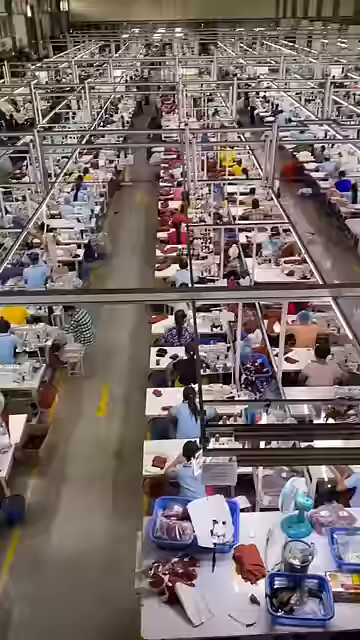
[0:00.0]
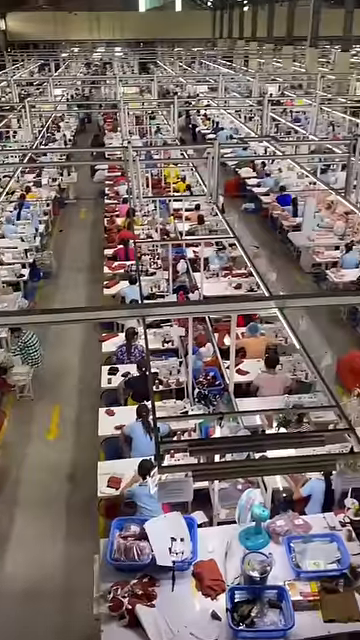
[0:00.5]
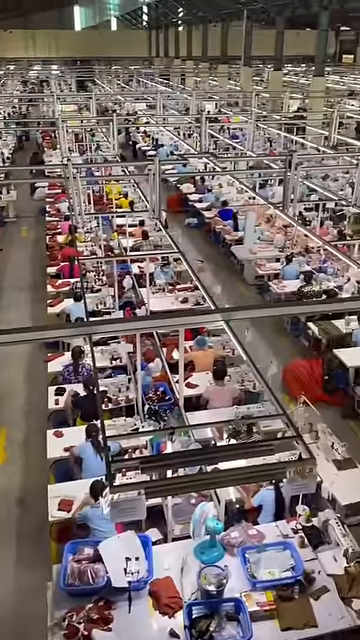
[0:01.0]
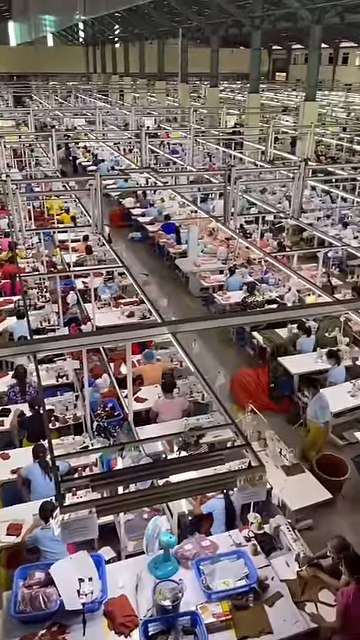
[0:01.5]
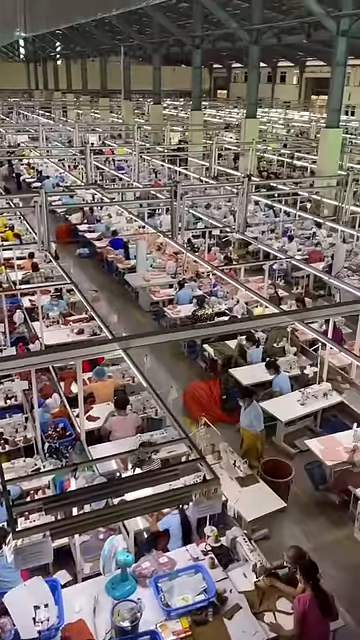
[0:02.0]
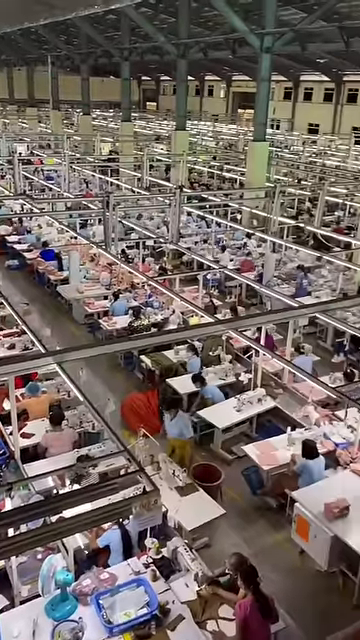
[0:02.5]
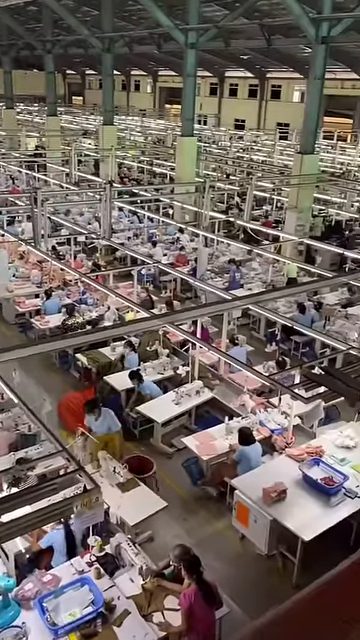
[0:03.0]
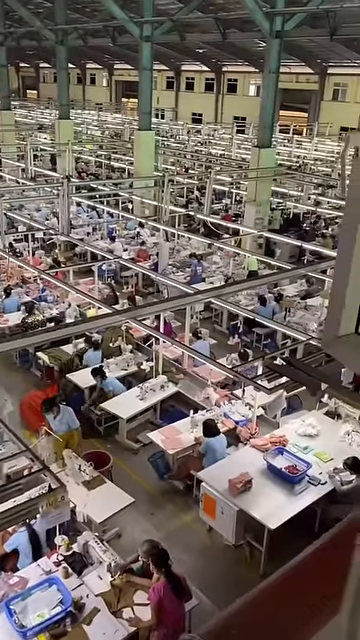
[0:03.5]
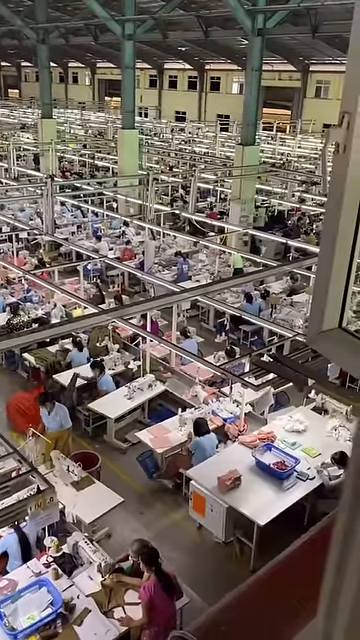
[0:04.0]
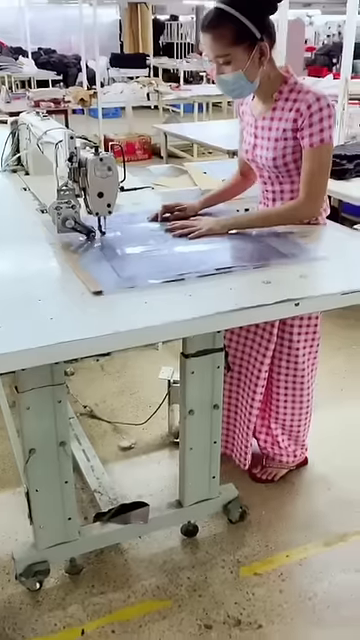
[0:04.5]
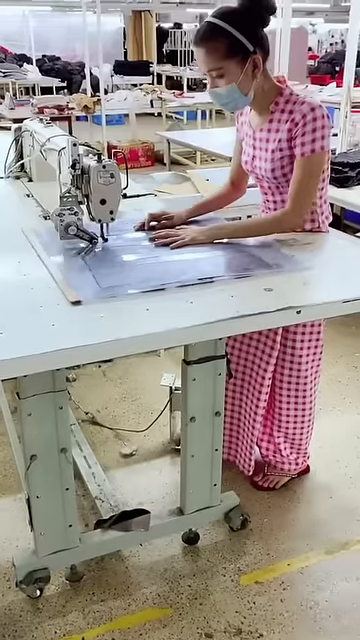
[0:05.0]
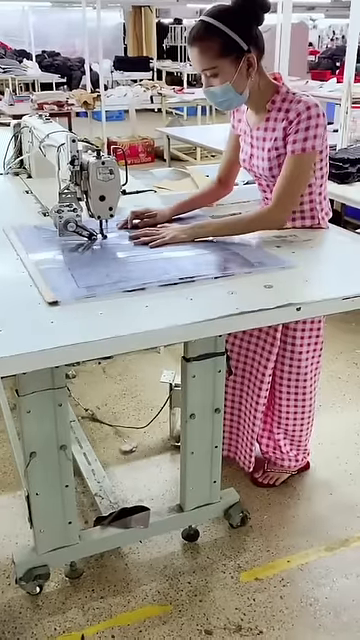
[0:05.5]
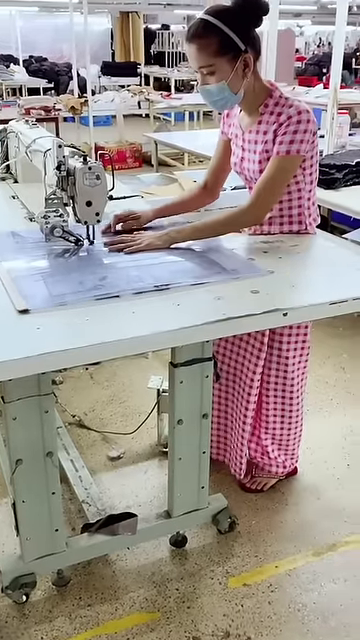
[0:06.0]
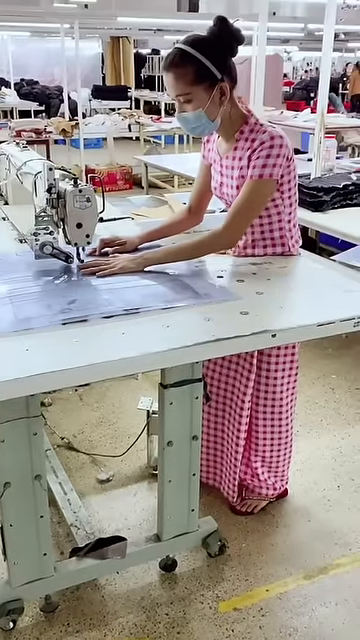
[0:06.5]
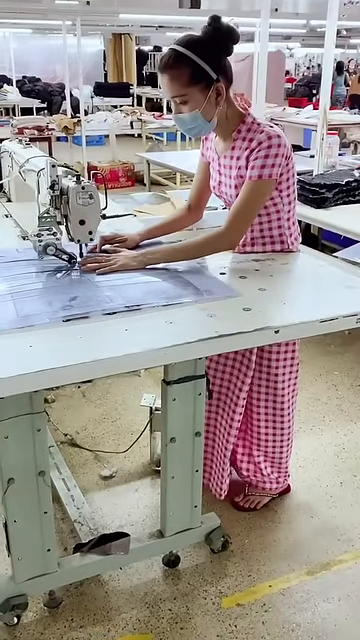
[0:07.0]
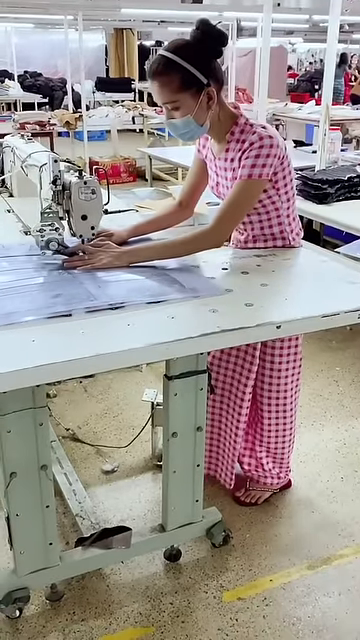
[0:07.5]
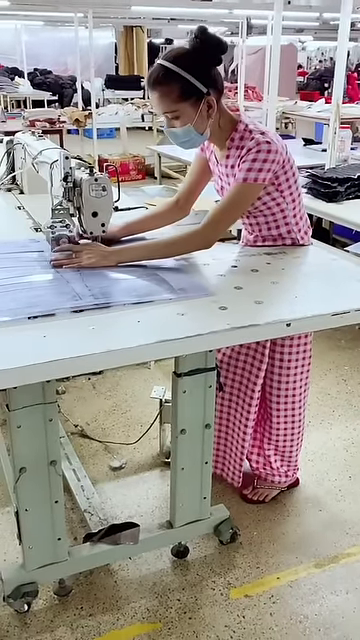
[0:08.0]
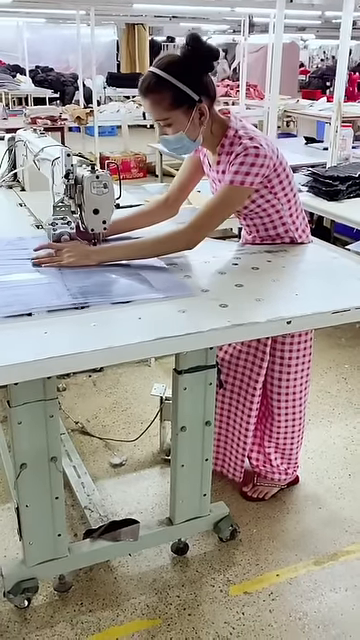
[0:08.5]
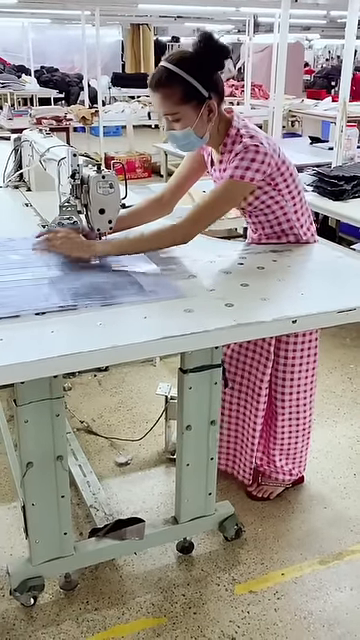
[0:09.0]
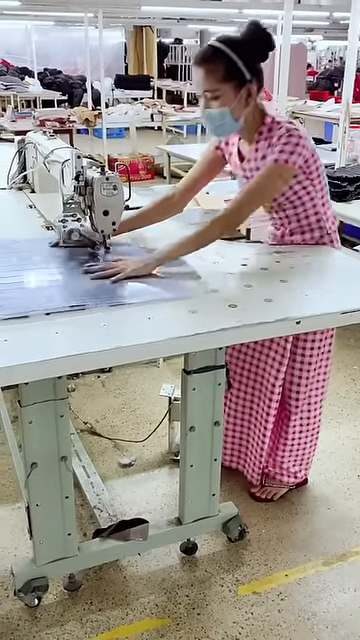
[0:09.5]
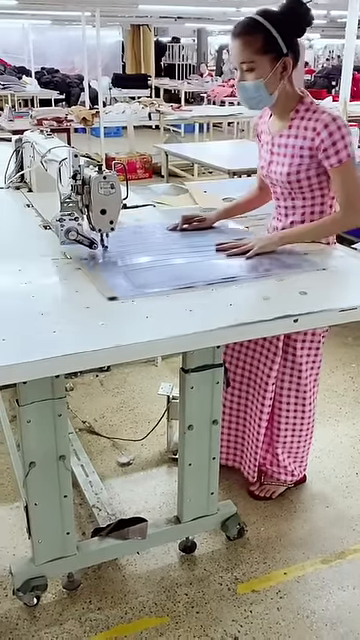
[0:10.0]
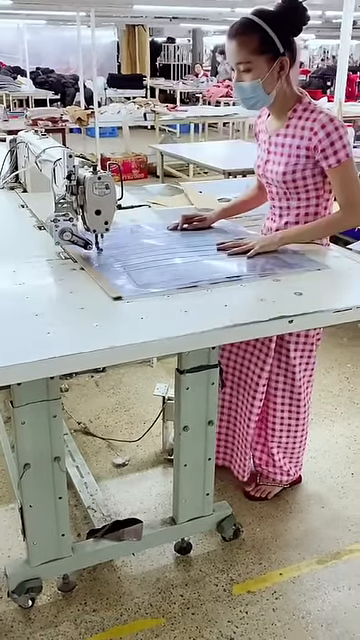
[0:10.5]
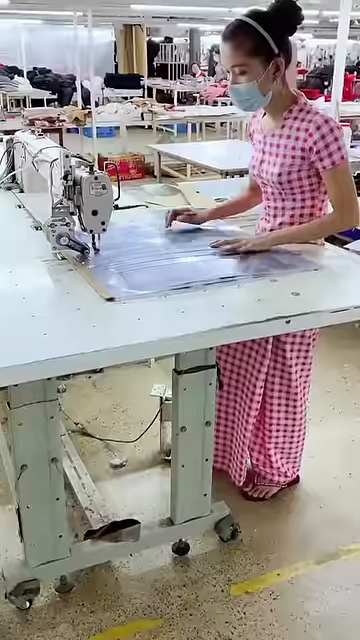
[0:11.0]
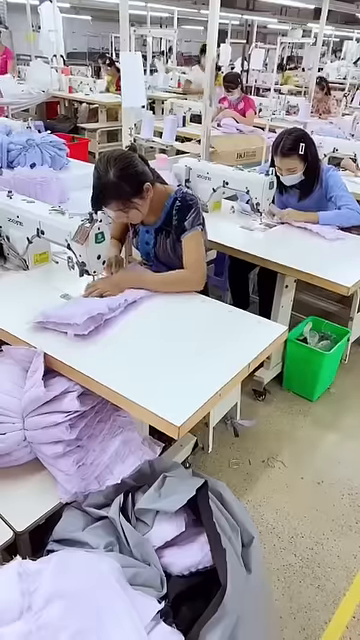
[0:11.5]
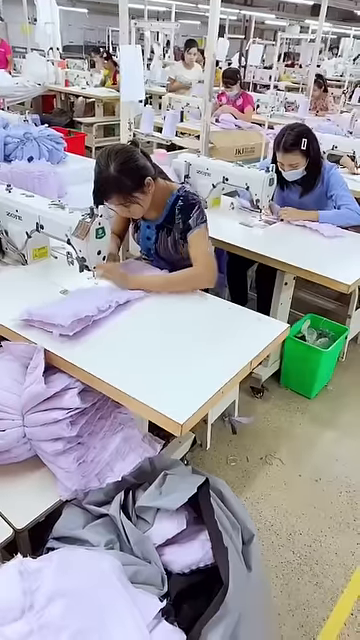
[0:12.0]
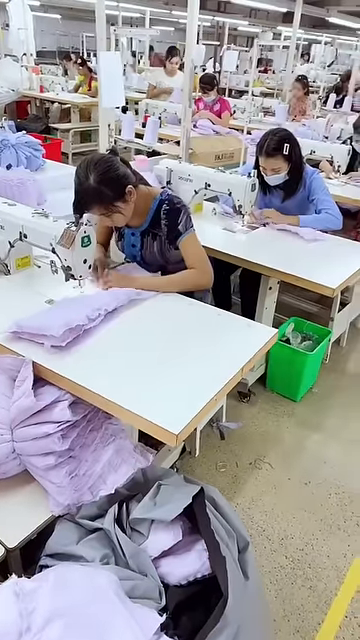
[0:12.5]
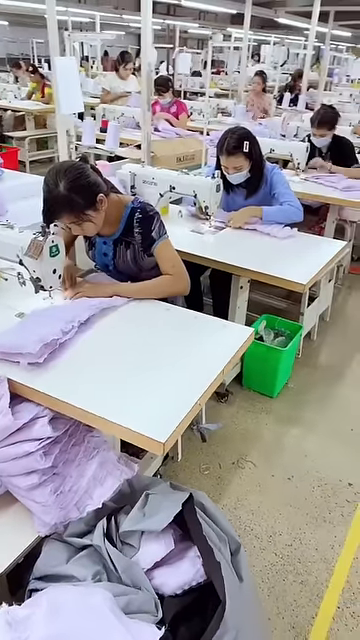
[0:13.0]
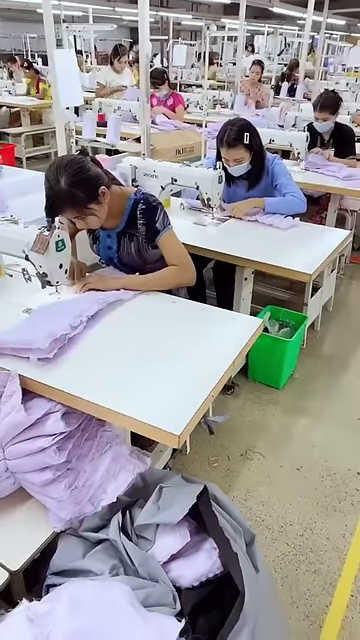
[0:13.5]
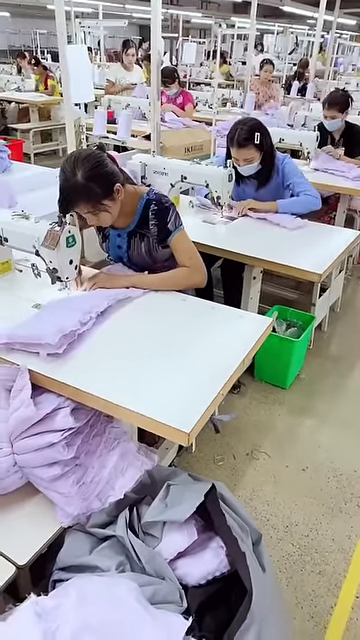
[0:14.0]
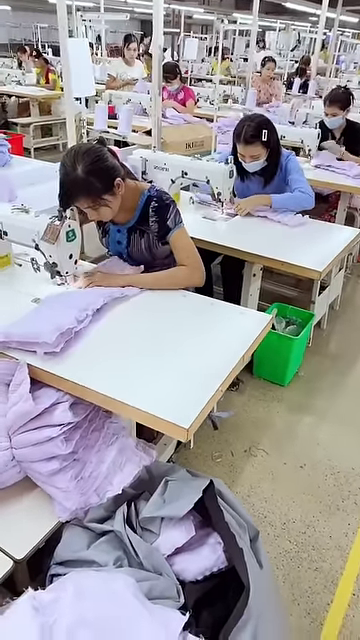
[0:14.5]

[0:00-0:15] Women work in a large garment factory filled with hundreds of white tables and chairs for the women to sit on while they sew and make clothing. Women use sewing machines to make the garments; some cut up fabric while others sew. The factory appears to be extremely busy. The main focus is a woman in a pink and white checkered outfit who is small in size and stature. She has a white headband on her head and wears a face mask. Many of the women in the factory wear masks, while some do not.